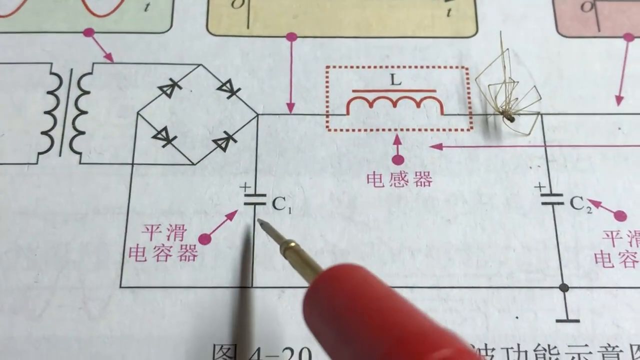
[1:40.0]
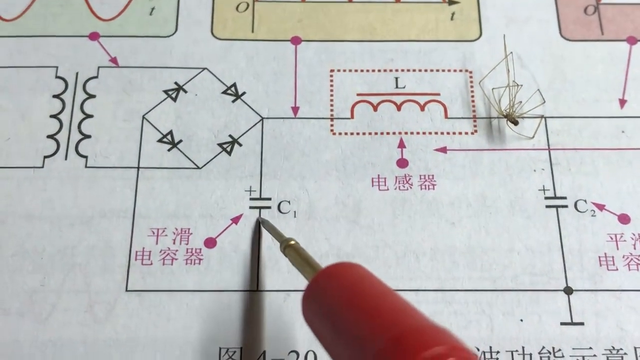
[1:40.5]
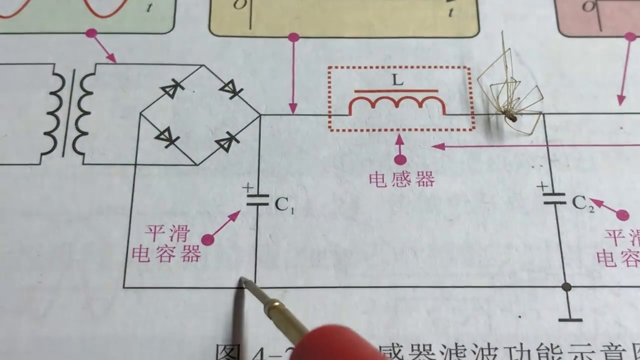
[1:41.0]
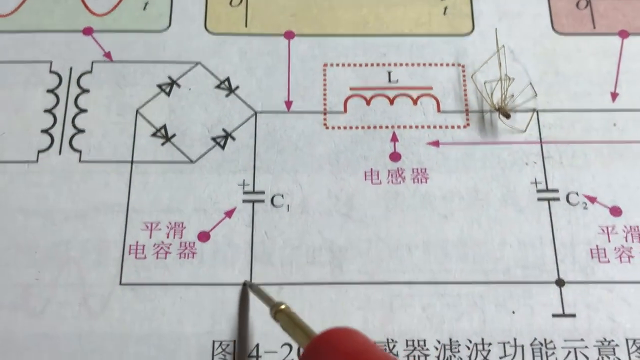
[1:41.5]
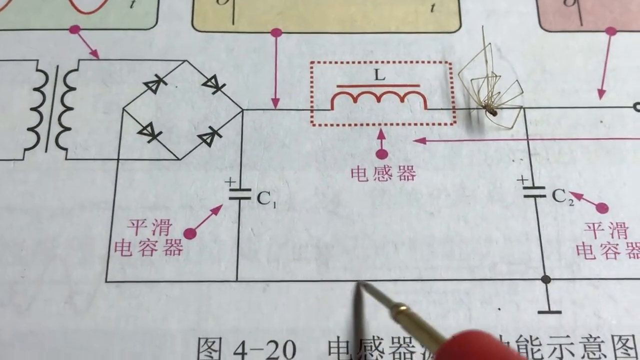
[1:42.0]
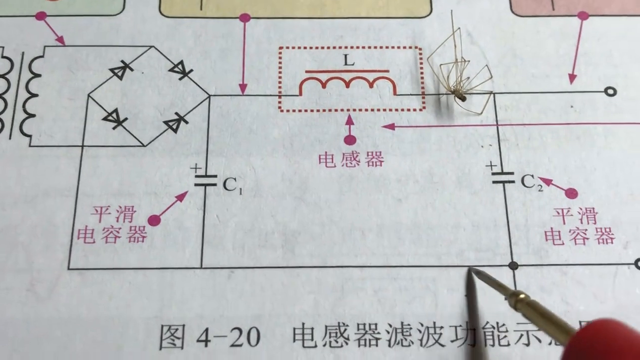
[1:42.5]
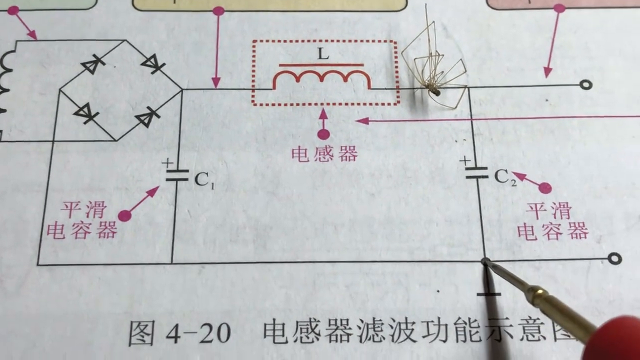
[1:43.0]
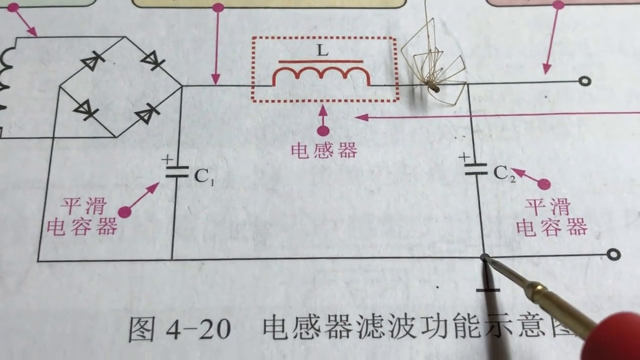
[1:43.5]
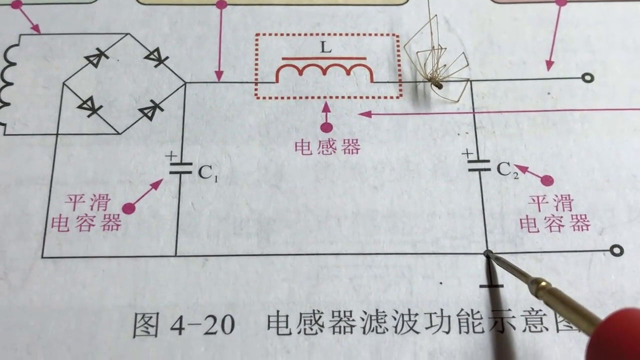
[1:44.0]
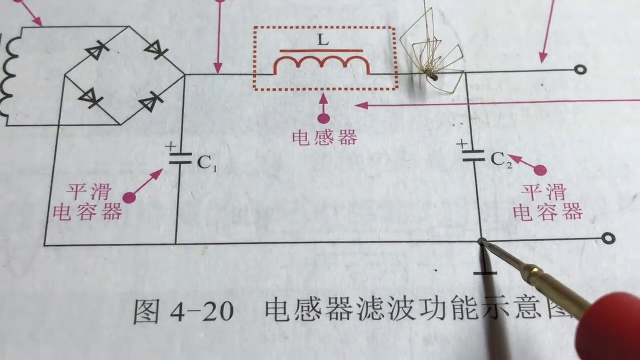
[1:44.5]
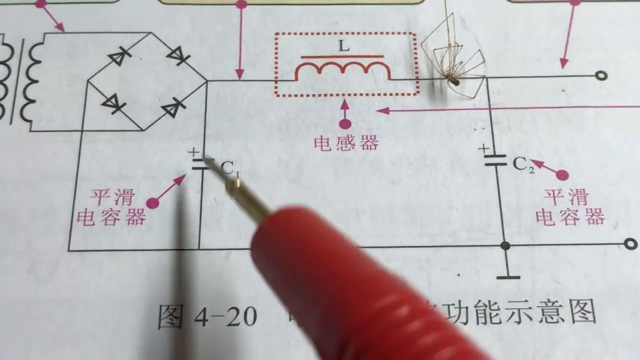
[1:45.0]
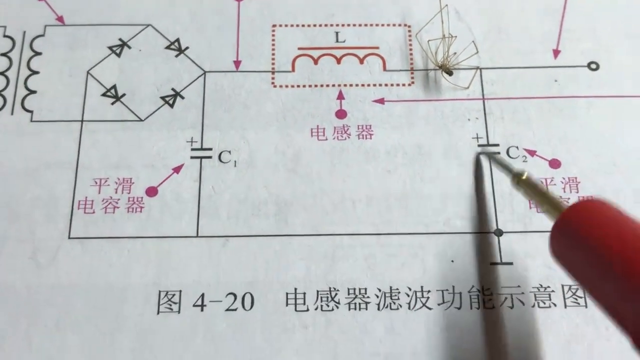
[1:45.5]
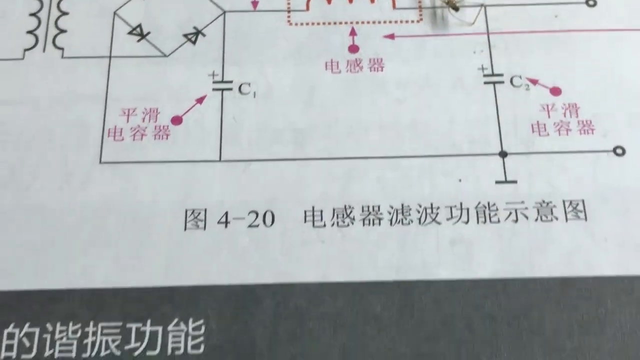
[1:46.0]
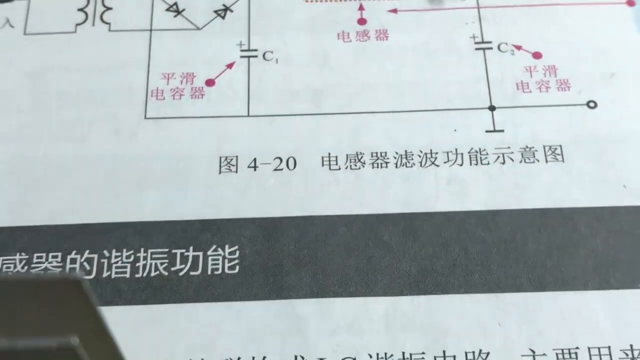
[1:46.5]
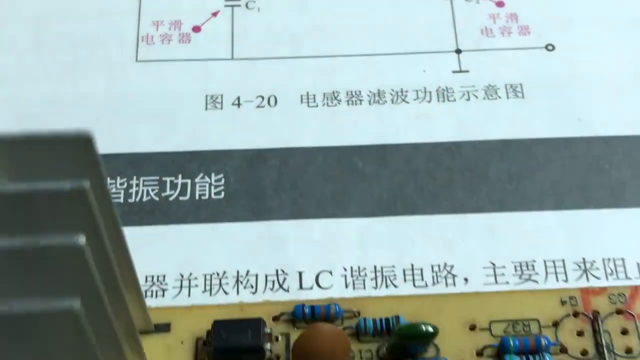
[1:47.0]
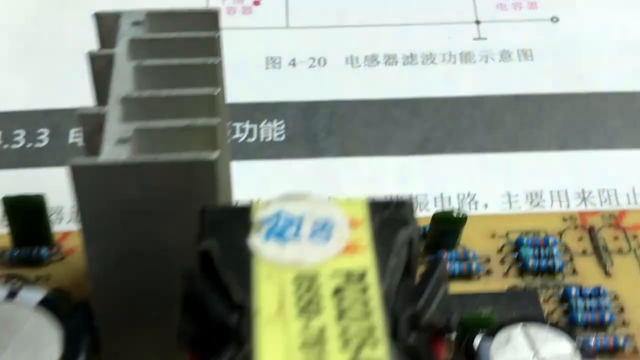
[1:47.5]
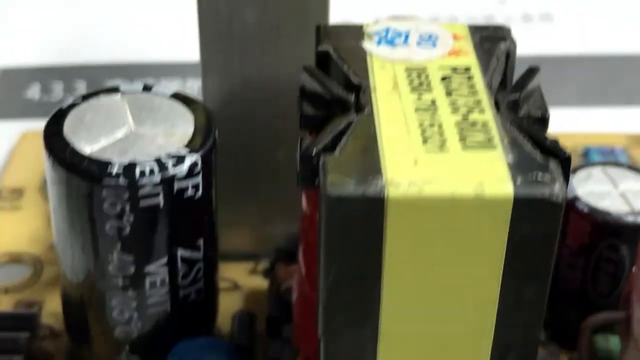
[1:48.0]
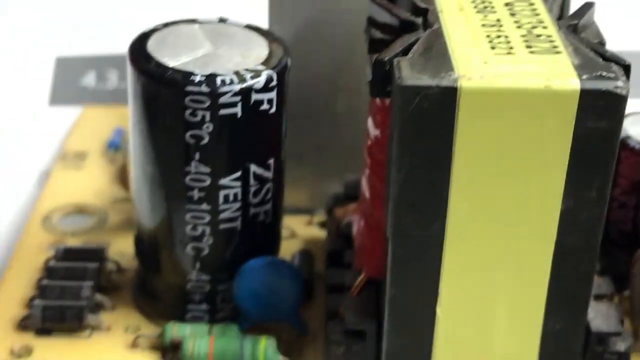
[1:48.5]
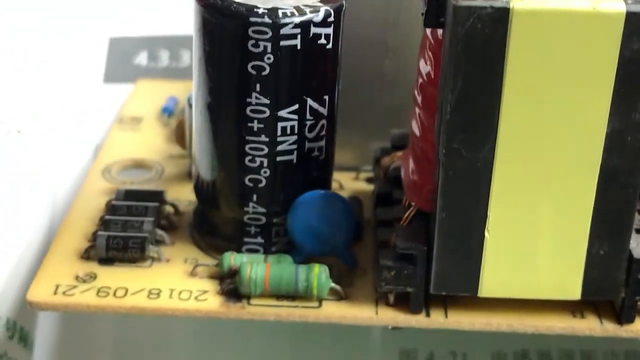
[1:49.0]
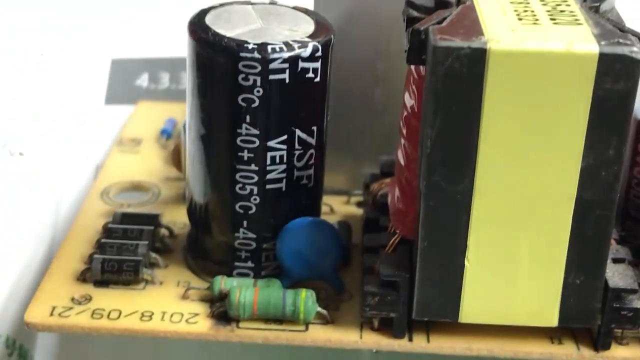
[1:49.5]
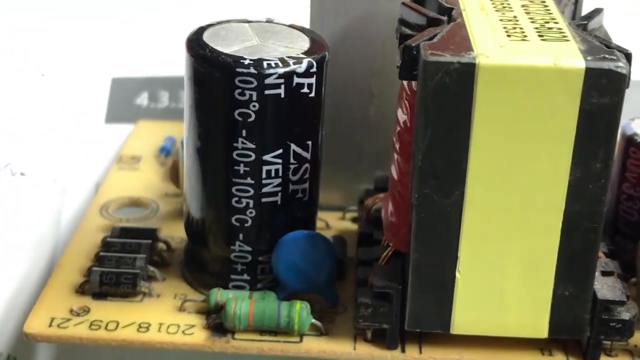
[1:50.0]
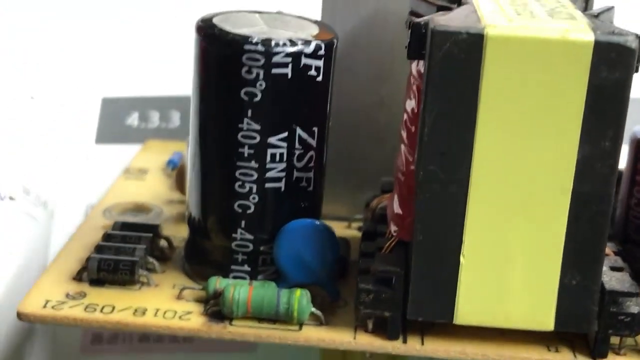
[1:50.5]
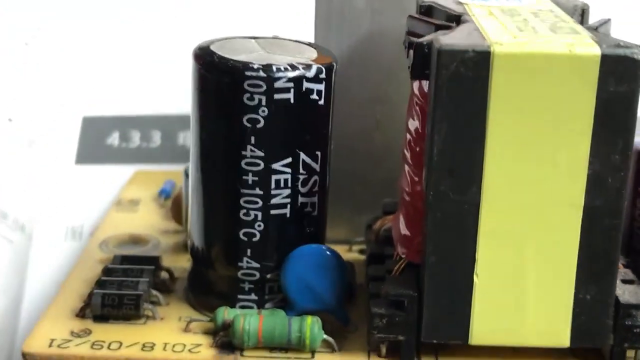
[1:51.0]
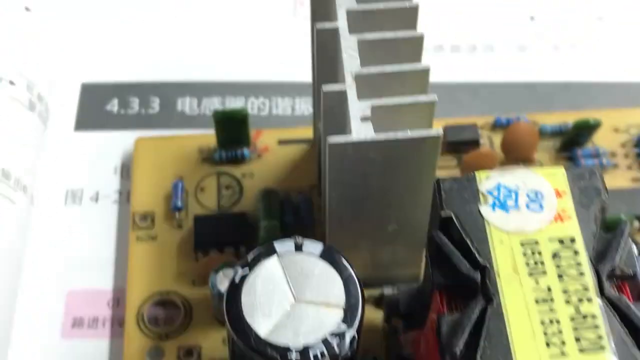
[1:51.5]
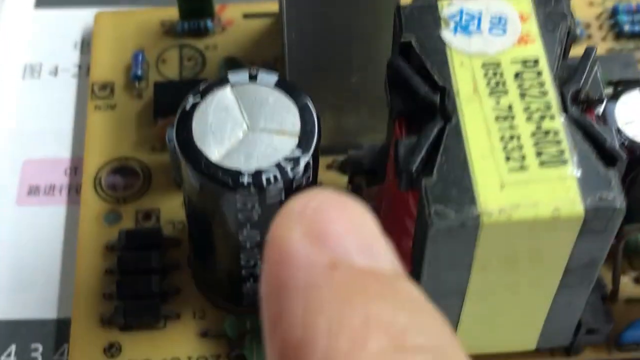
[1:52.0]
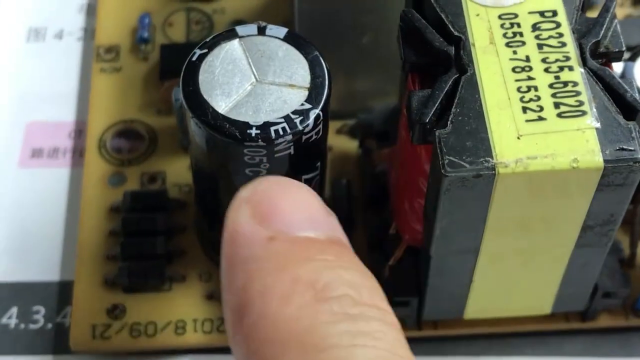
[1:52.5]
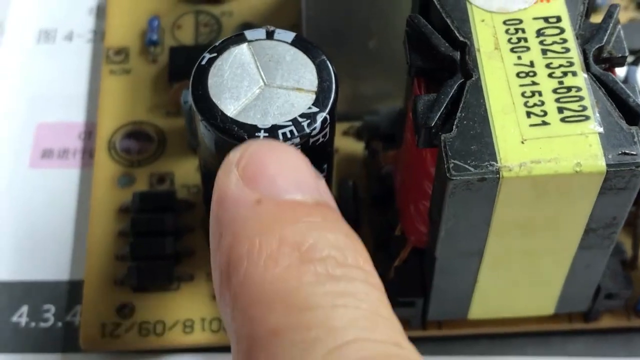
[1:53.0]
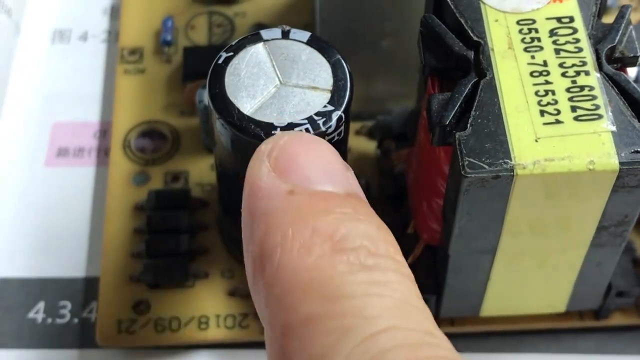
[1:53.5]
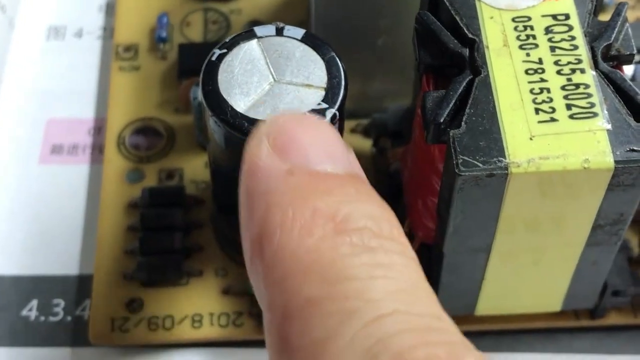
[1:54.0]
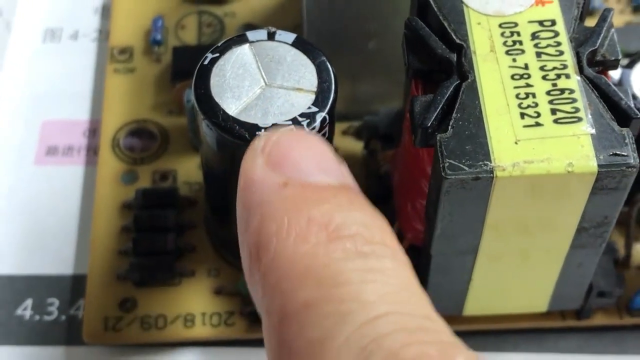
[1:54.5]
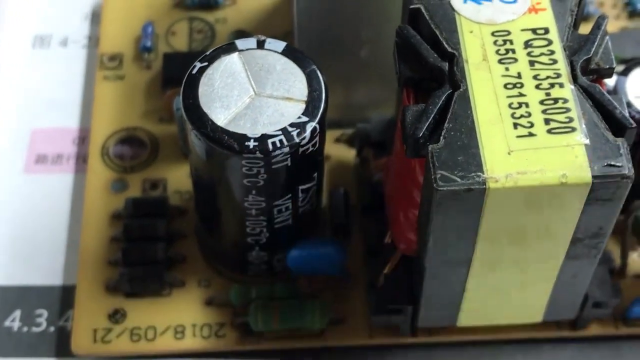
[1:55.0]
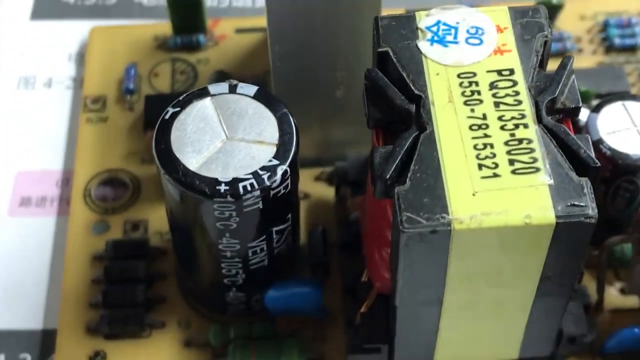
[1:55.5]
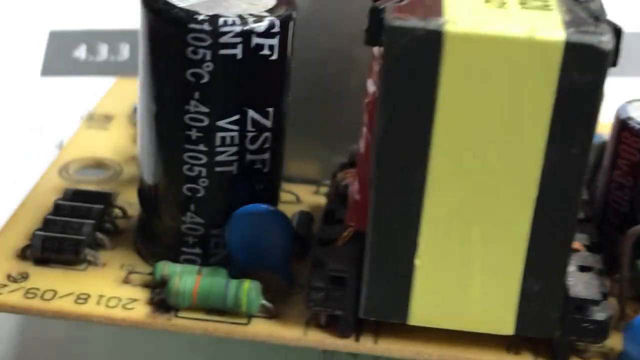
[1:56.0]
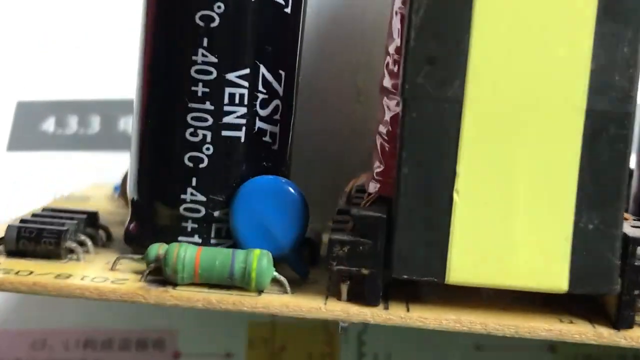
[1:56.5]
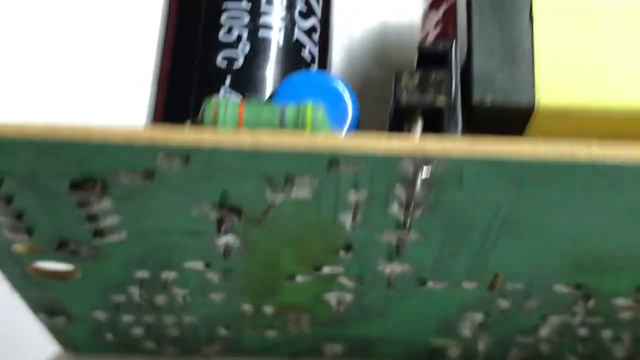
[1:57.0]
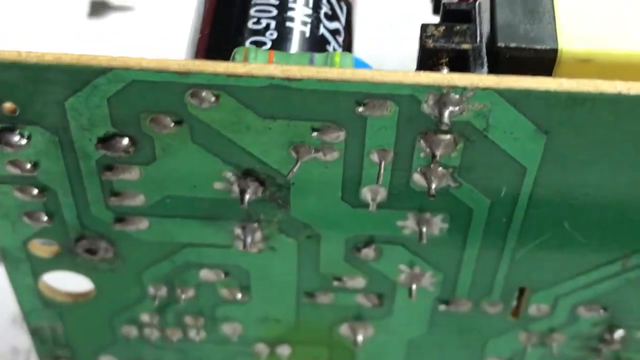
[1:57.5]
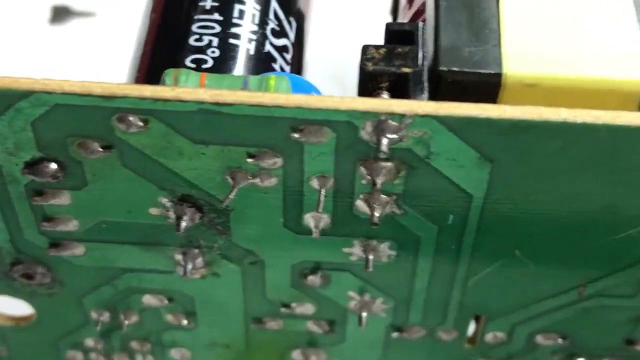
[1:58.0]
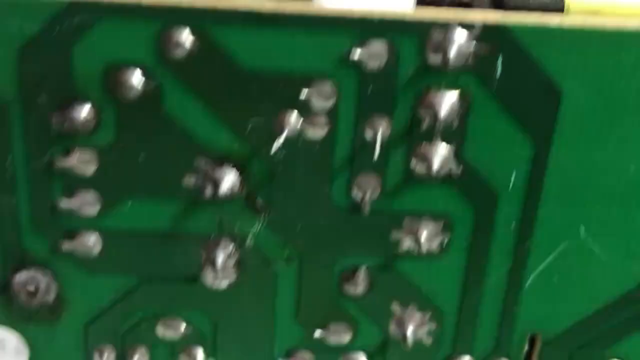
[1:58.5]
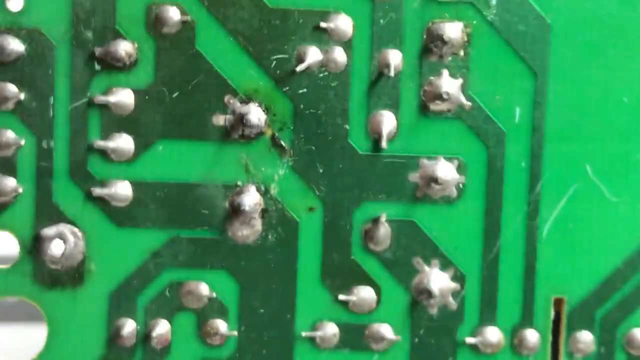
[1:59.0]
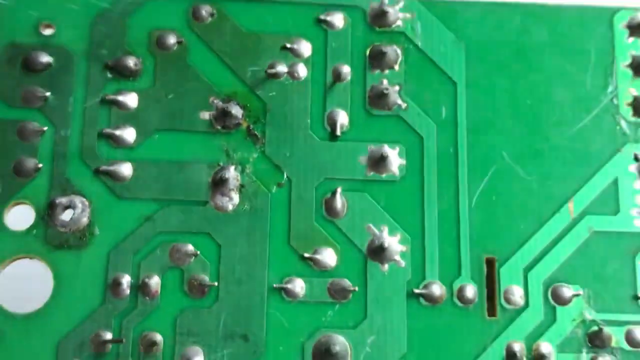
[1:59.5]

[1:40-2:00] A diagram on a white page is made of black lines along with other shapes and colors, and a dead spider is on it. A pointer points between two sections that look kind of the same: both show a plus sign, an equal sign and the letter C, but the left one has a small number 1 and the right one a small number 2. Kanji characters are also on the page, and something below reads "4-20". The view then shifts to an orange circuit board with black batteries, and a finger points to one of the black batteries. The person flips the board over, showing its back, which is green.